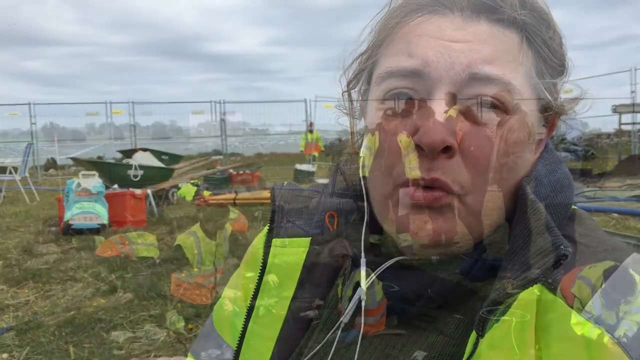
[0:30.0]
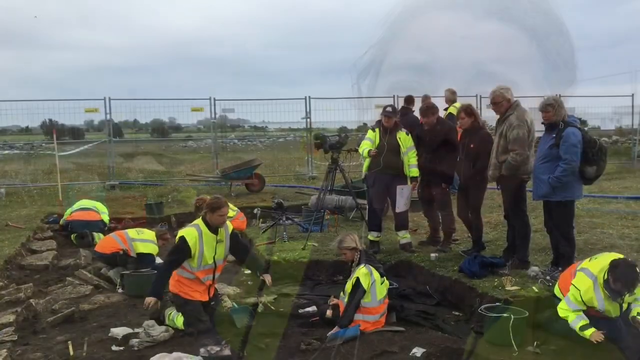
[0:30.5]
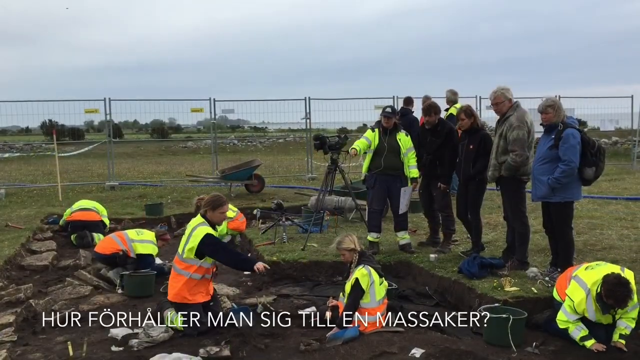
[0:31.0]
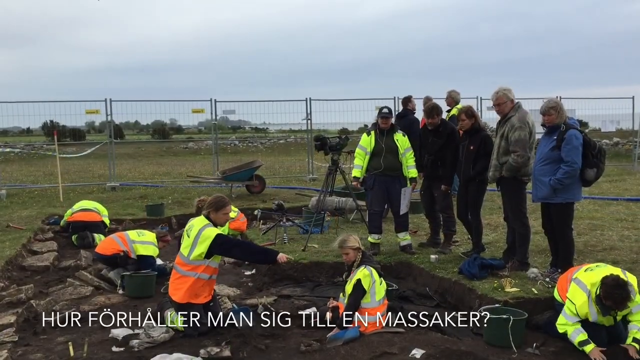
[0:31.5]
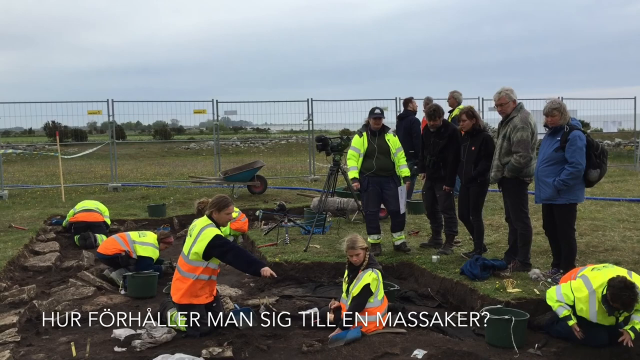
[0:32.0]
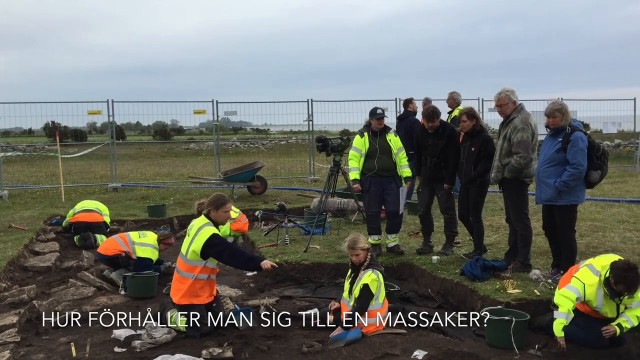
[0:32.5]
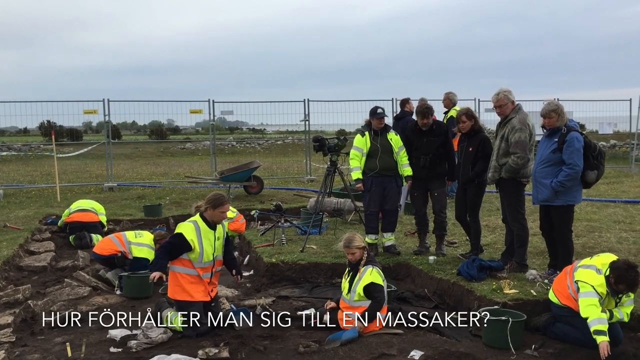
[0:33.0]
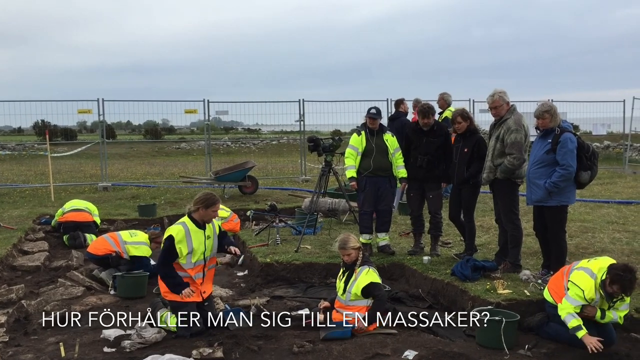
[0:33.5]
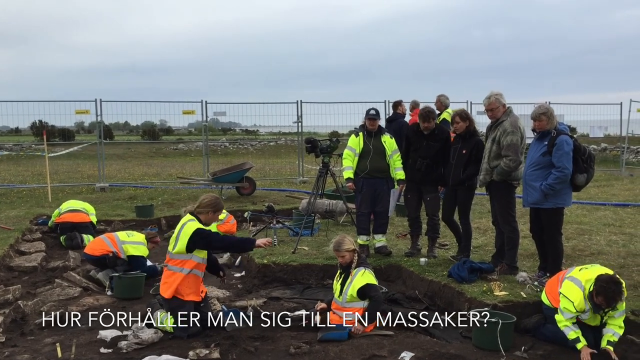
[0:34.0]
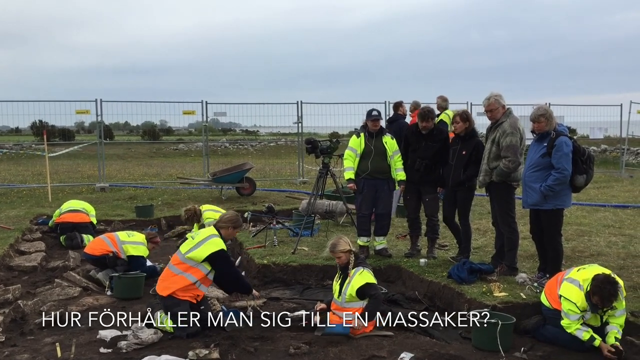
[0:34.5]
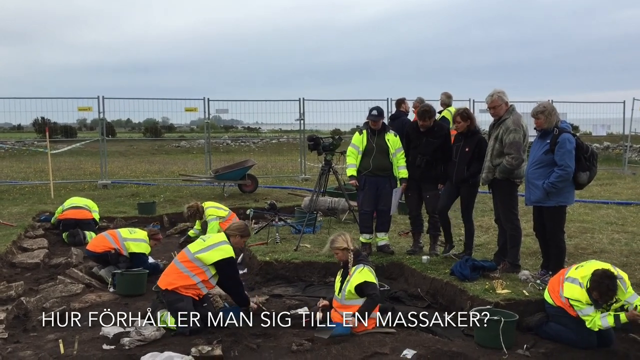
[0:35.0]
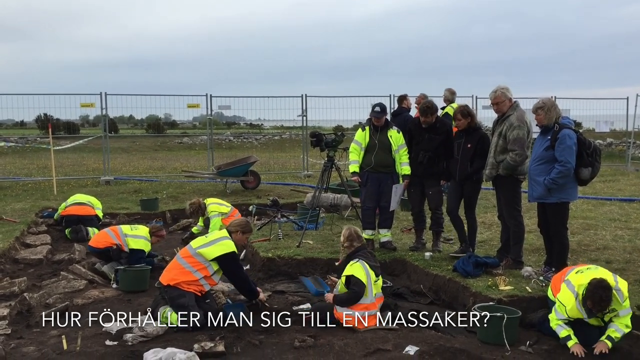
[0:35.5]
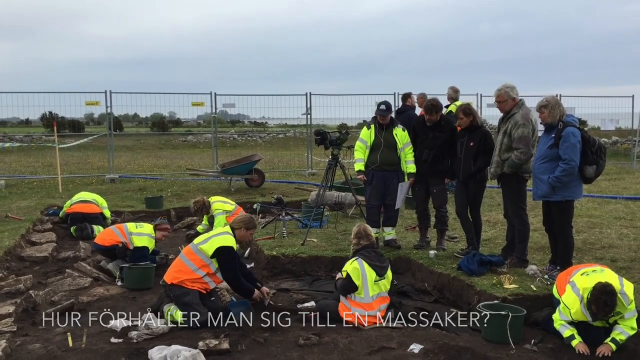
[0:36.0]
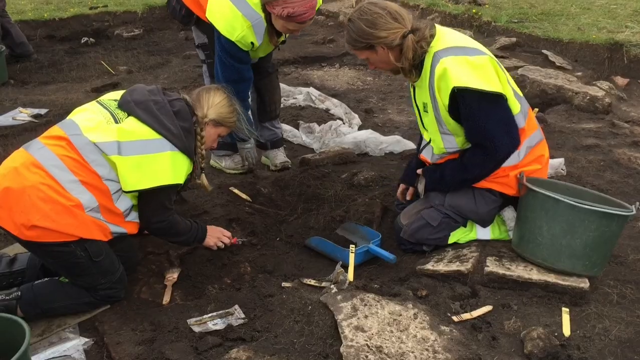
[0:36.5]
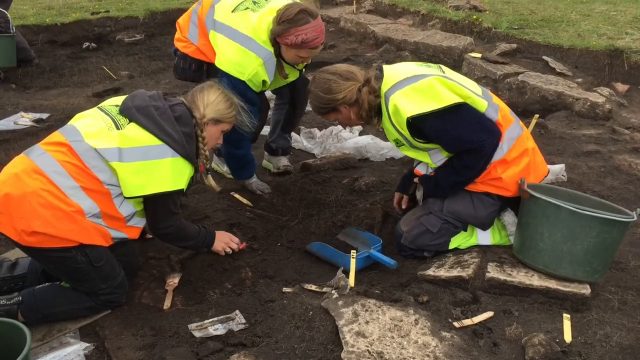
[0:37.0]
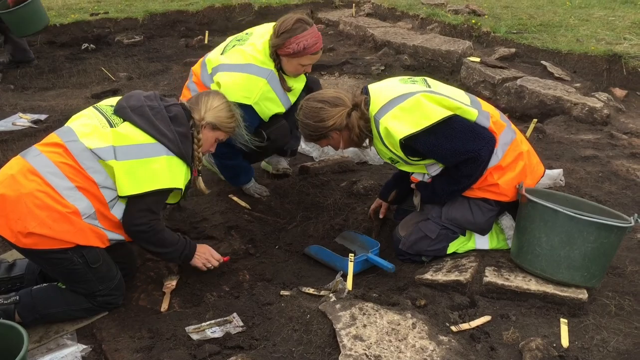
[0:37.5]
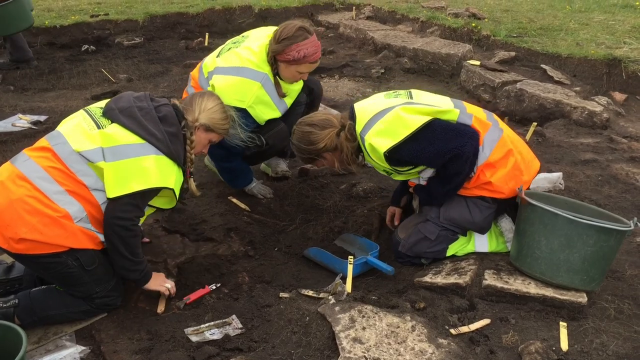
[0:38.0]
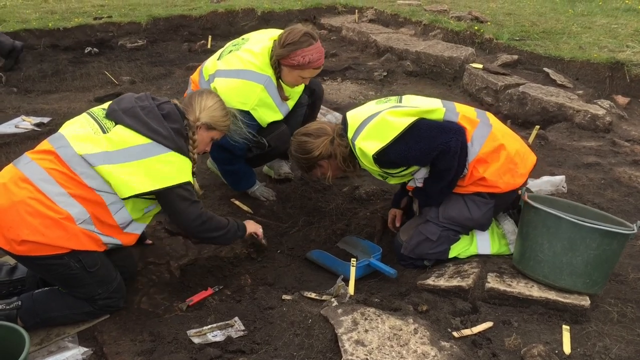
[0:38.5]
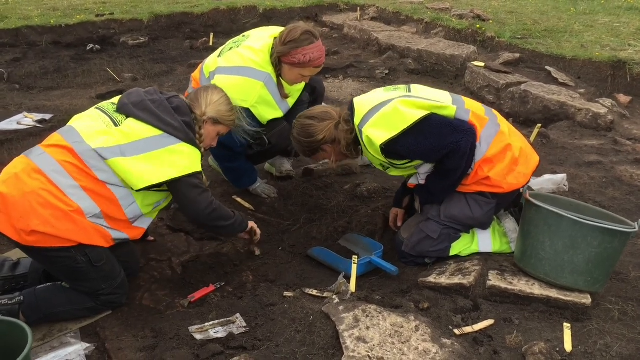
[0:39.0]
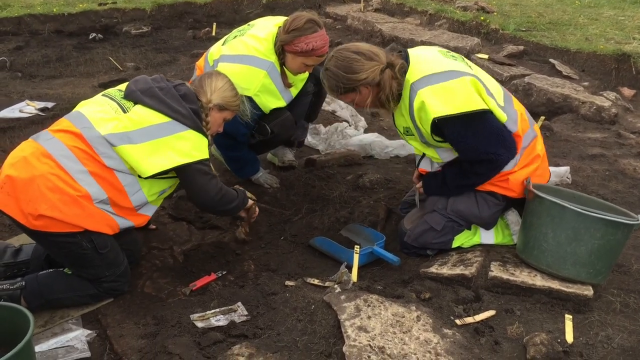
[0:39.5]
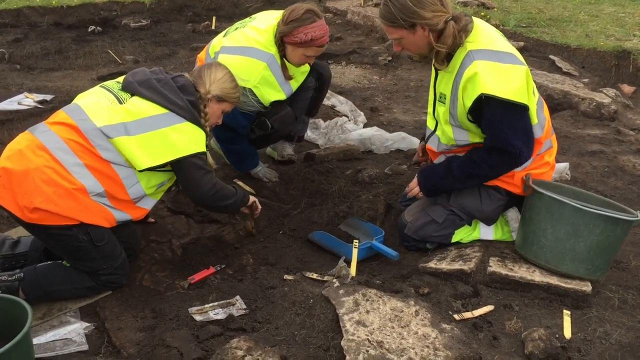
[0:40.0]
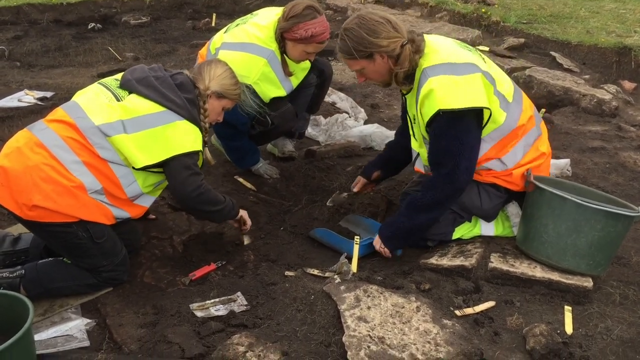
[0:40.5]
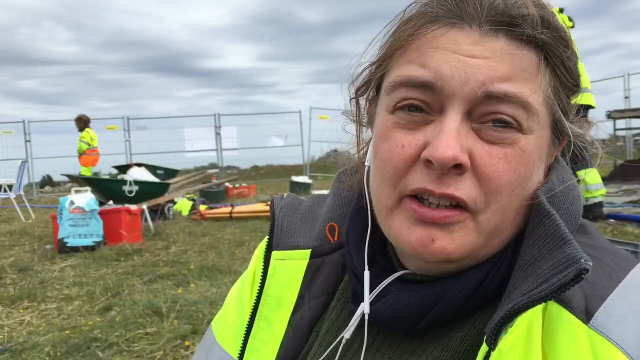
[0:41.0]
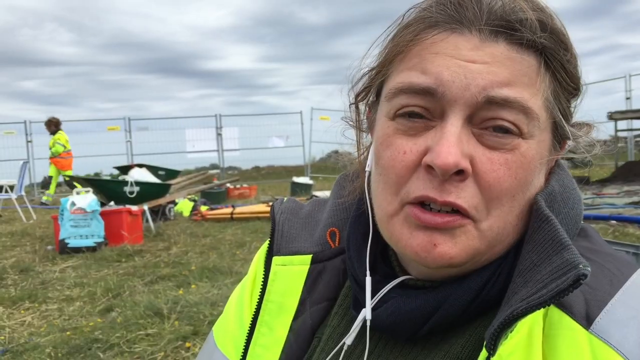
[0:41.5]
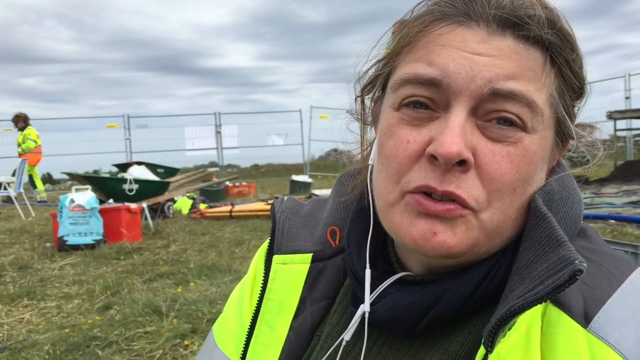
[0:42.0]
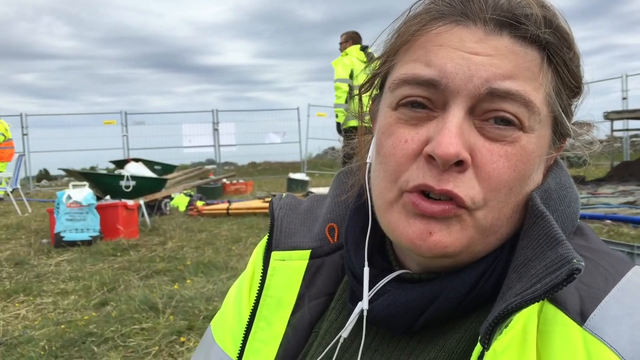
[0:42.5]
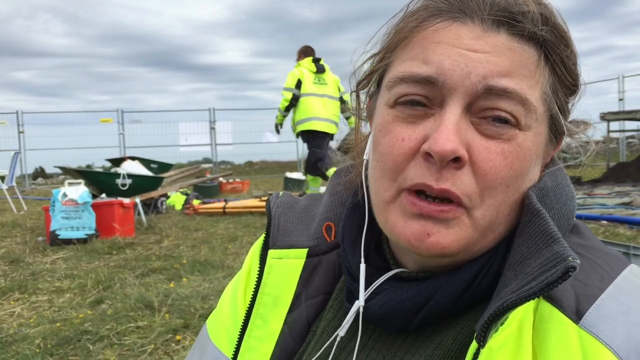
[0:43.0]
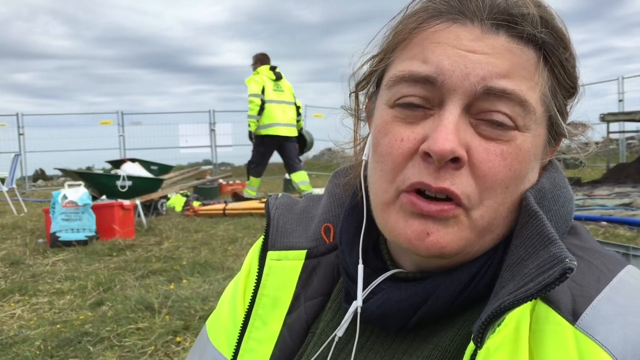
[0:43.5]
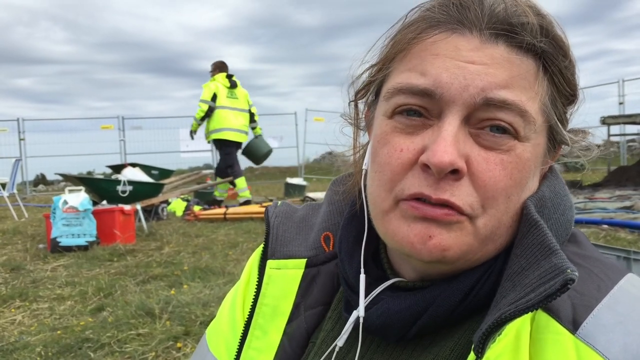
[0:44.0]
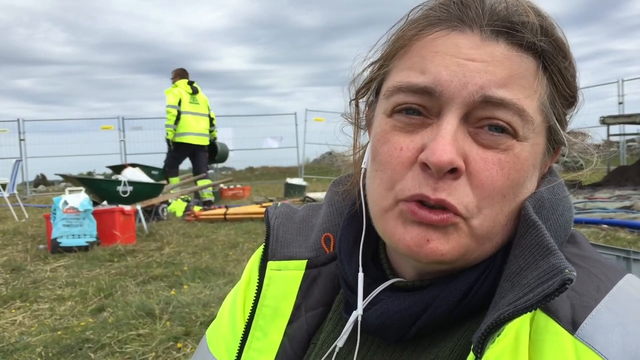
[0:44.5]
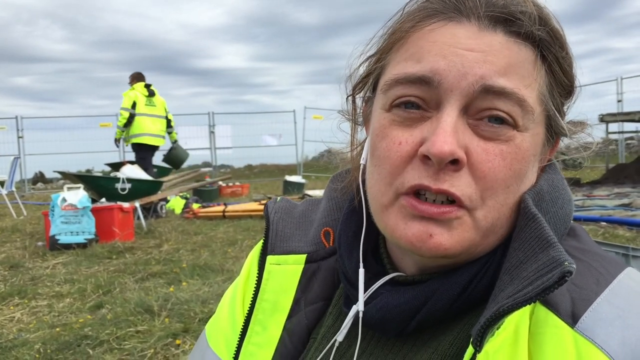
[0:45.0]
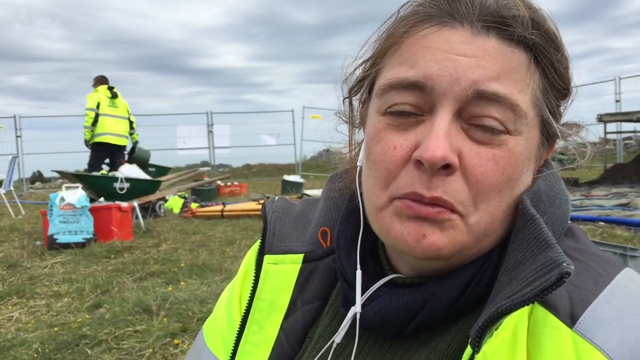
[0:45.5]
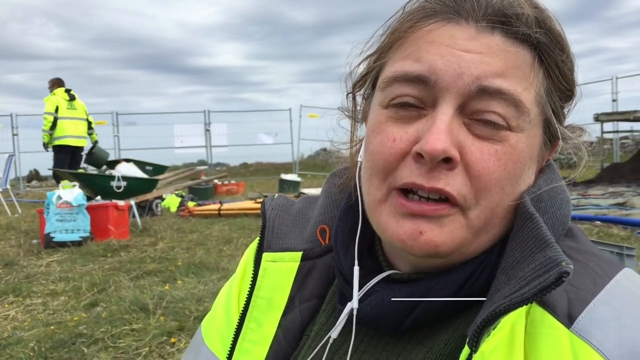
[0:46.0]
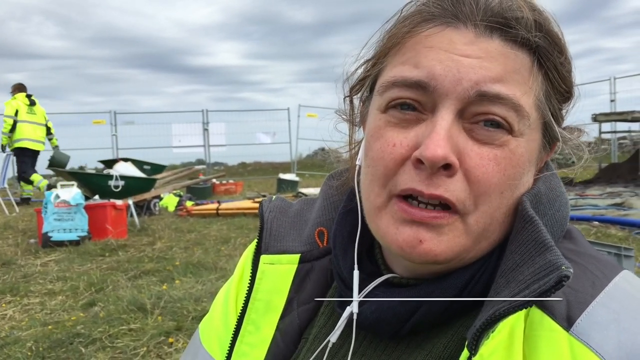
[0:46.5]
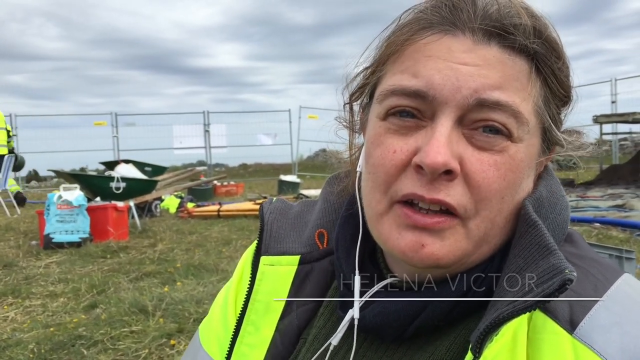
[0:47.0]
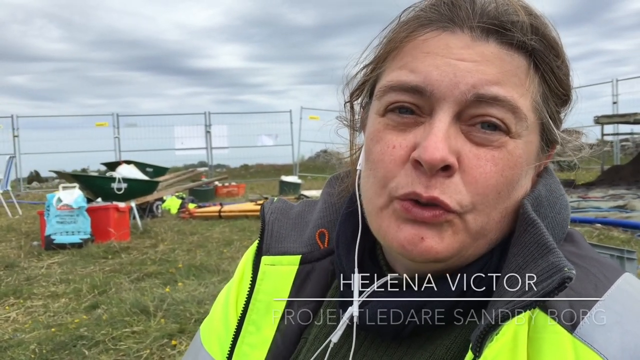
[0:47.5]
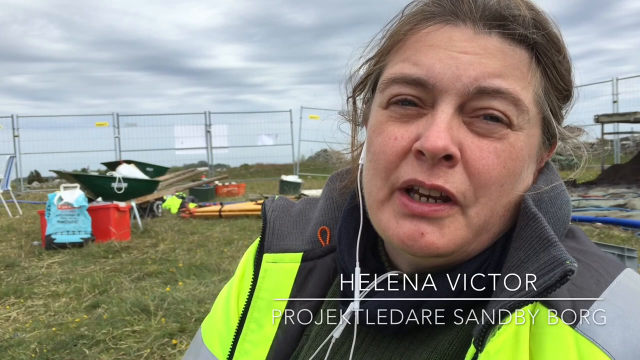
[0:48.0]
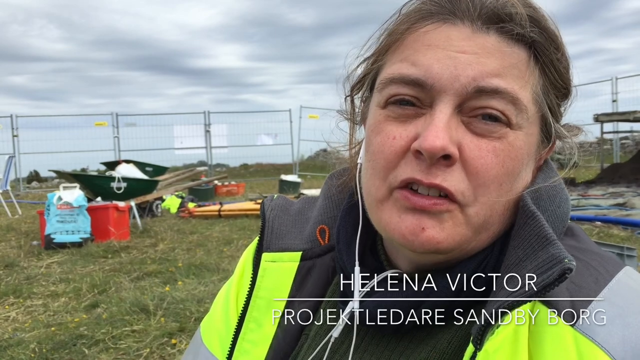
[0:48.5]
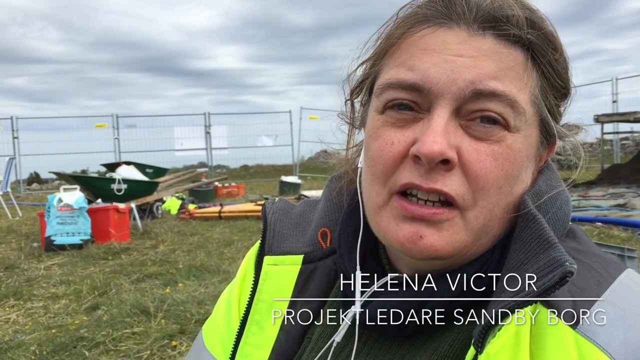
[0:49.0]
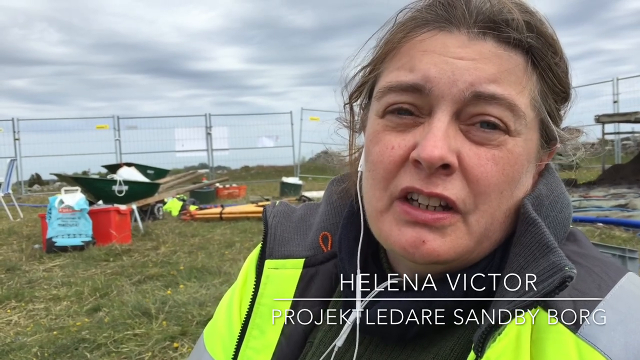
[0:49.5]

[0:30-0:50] Around 10 to 12 people stand around the excavation site; some are close to the ground and some stand talking to each other. The camera then zooms in on people digging in the ground, around eight of them, including three young girls digging close to the ground. Some people wear regular clothes such as dark coloured jackets and pants, with backpacks, while others wear high-vis jackets, some completely yellow and some yellow and orange. In the background are a camera being used to record, a wheelbarrow, and fences surrounding the area. The sky is grey and cloudy, with trees in the background. Subtitles in a different language appear, along with the location and the year. A man gives instructions to the girl next to him, apparently about where she should go or what she should do. Finally, three girls dig and look for something in the ground below them.